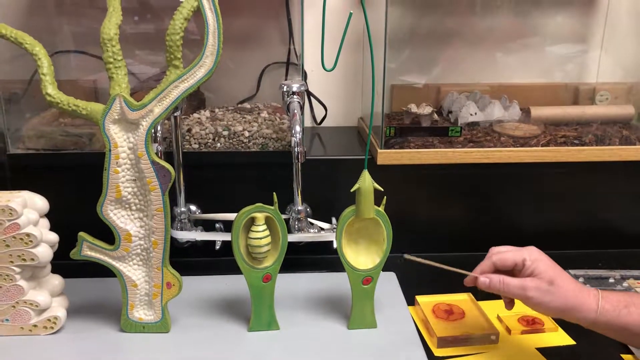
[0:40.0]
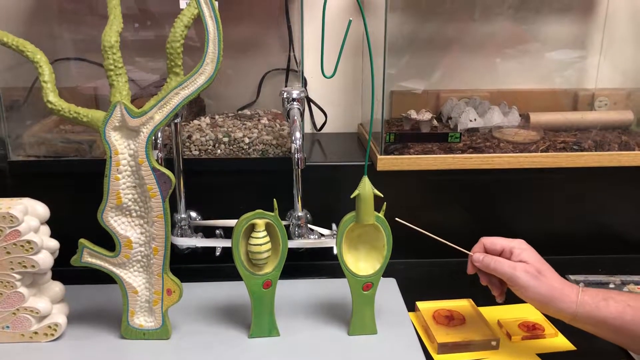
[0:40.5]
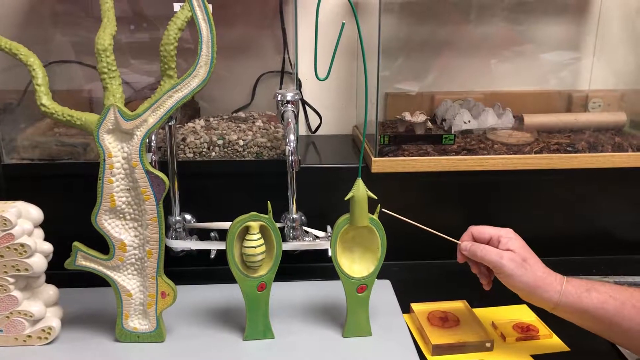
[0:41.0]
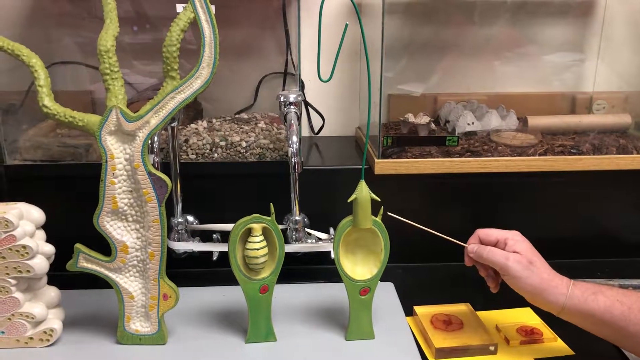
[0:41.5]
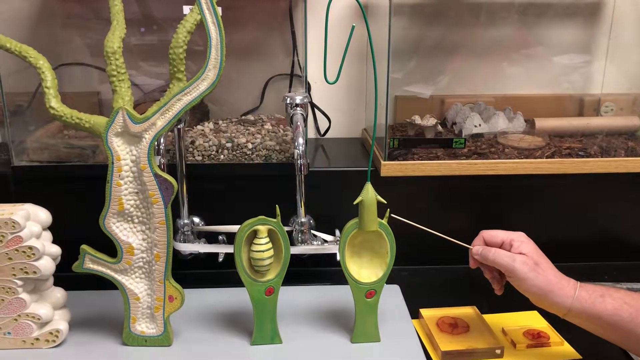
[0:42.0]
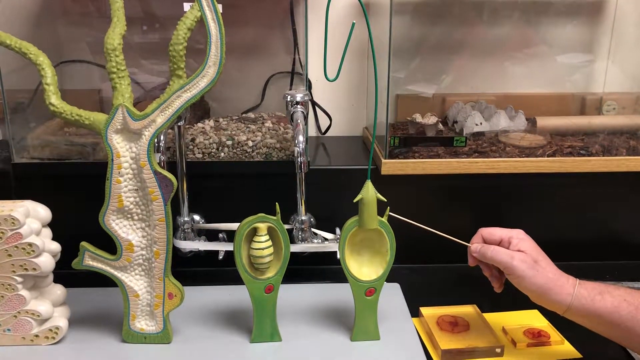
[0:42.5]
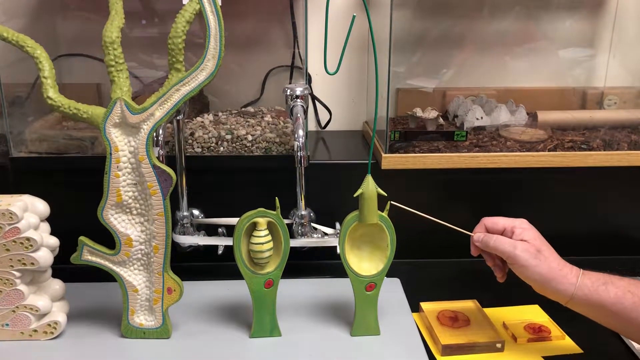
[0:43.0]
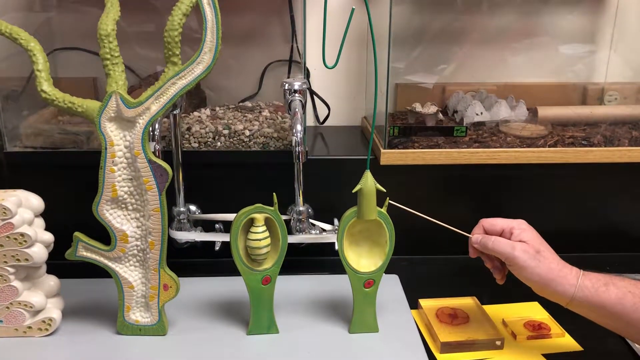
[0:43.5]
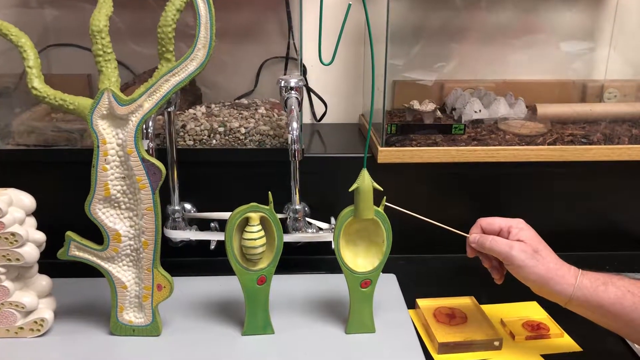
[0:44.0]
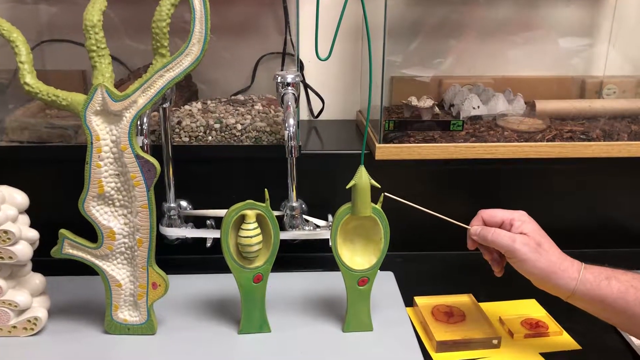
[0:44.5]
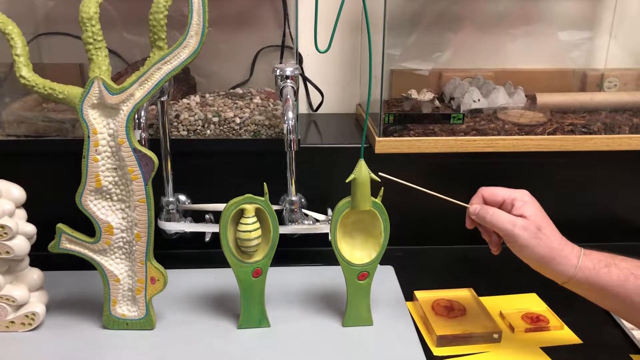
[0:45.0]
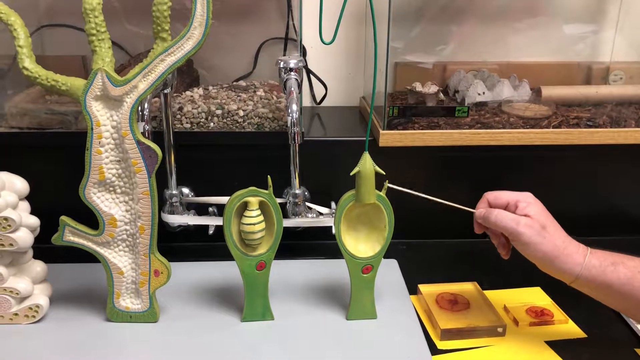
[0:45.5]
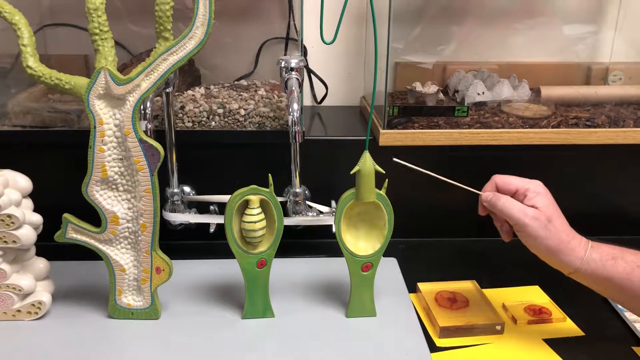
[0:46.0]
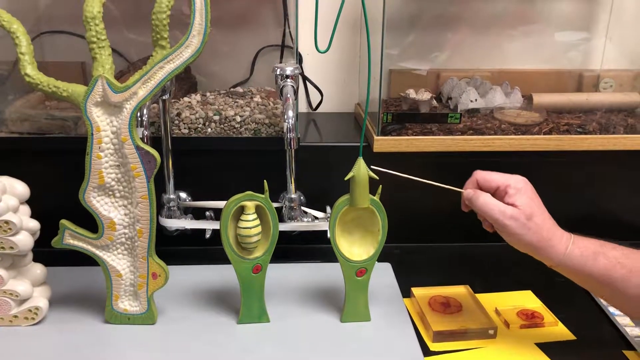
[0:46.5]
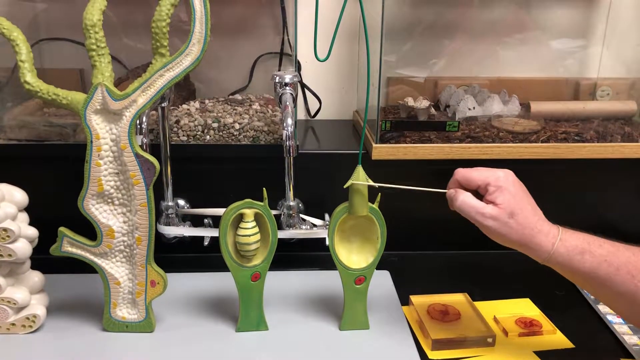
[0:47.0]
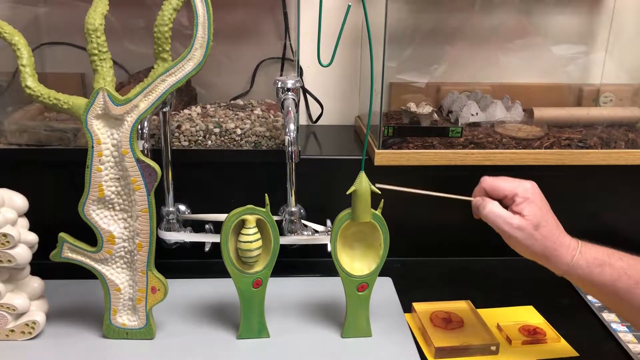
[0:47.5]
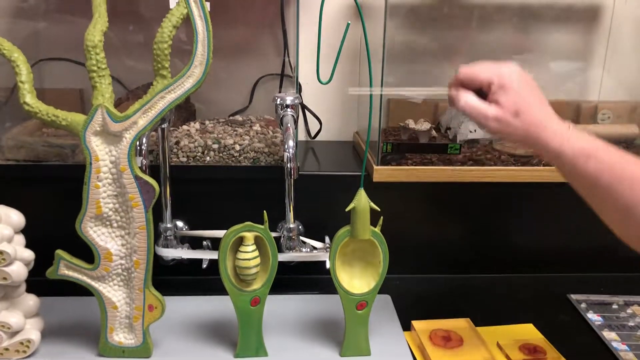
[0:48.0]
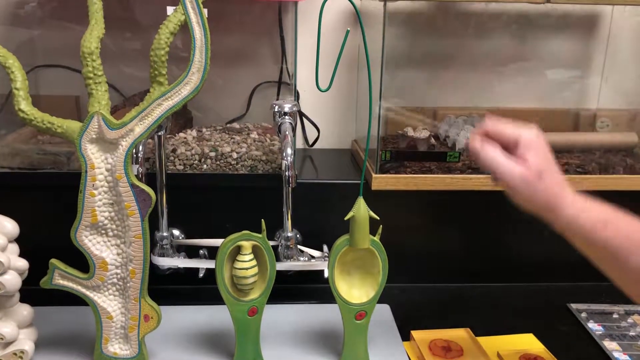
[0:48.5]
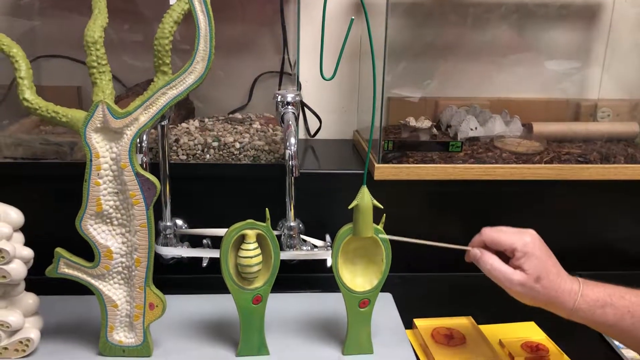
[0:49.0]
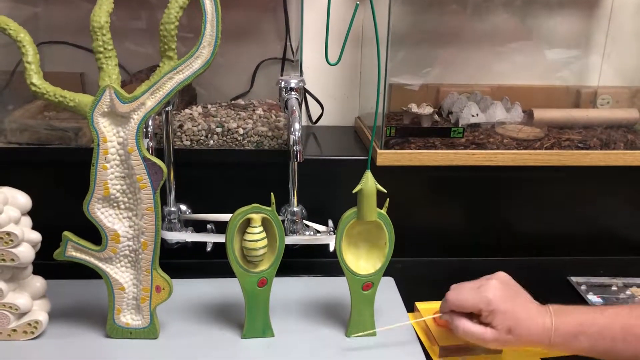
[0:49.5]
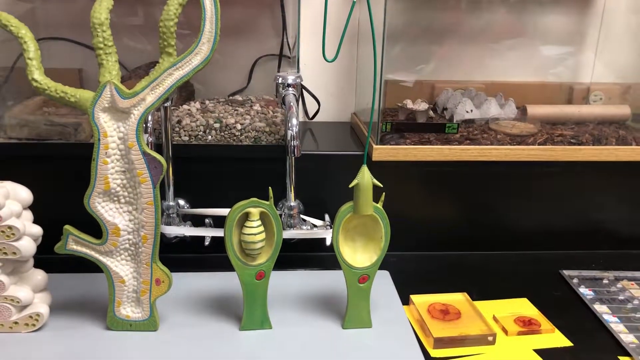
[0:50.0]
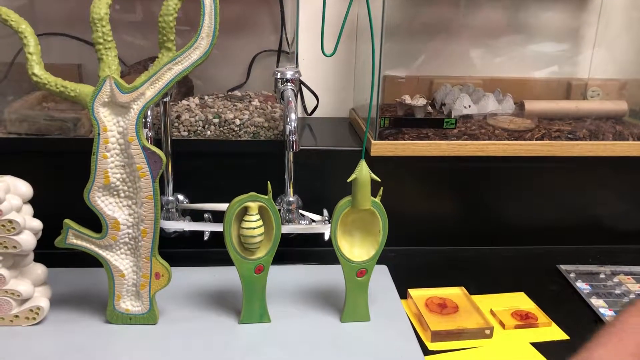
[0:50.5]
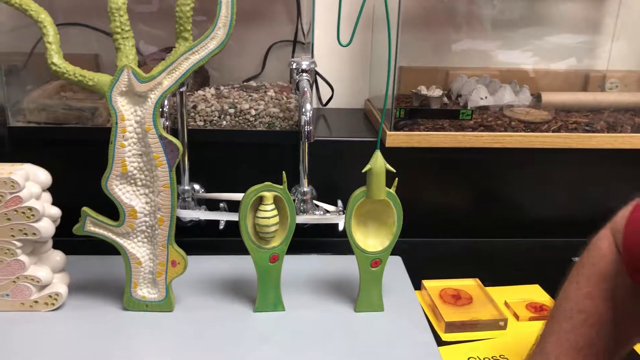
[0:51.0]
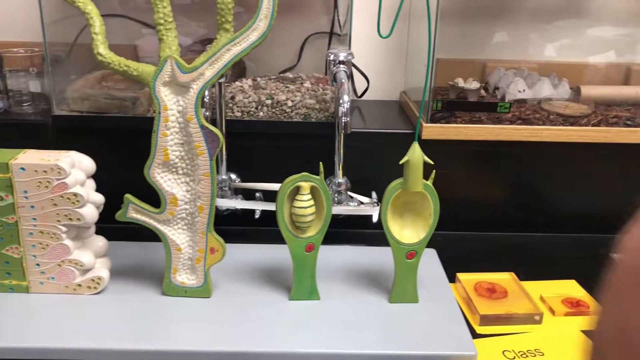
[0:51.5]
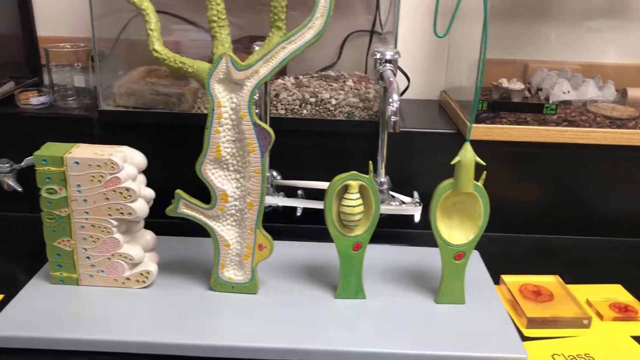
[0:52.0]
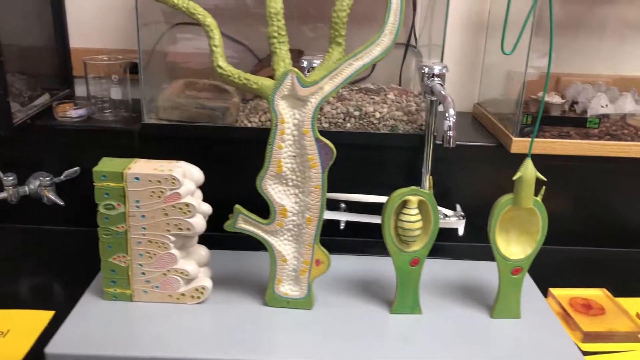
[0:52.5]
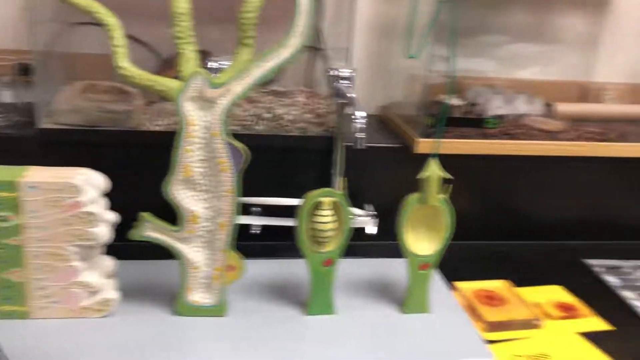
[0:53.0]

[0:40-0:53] A person's hand points with a thin white stick at the parts of a plant, particularly the cellular structure of plants. The models are at a large scale so the shapes and location of the cellular structure can be seen clearly. They are placed in a row on top of a white board inside a laboratory space with black benches. Behind the benches are some chrome taps and lots of apparatus suitable for a biology class that can be used as teaching aids. The teacher doing the demonstration is off screen; only their hand is visible.